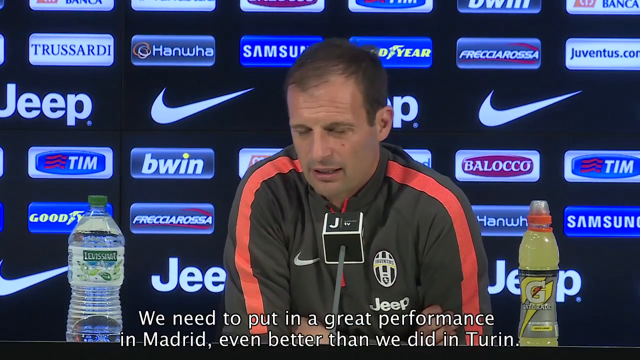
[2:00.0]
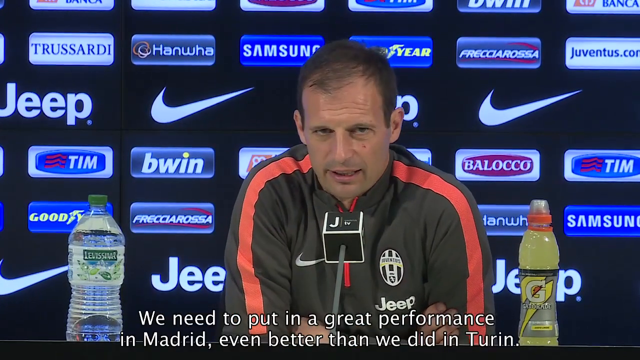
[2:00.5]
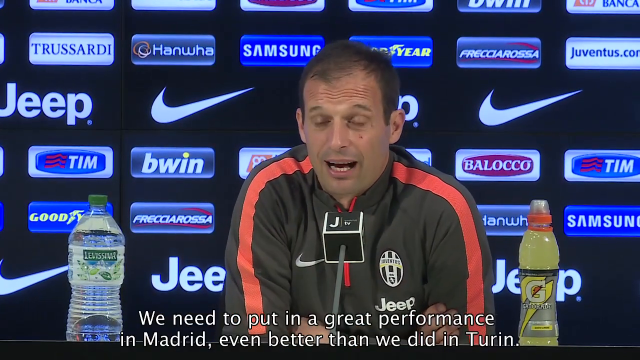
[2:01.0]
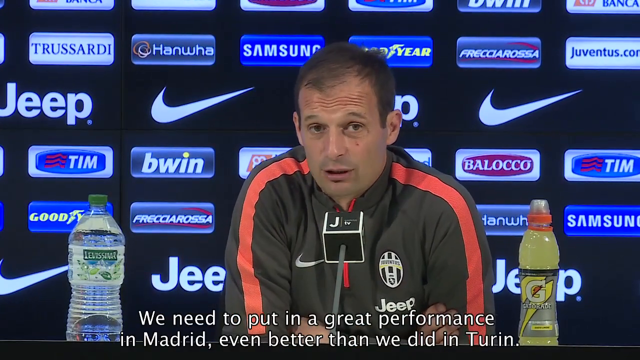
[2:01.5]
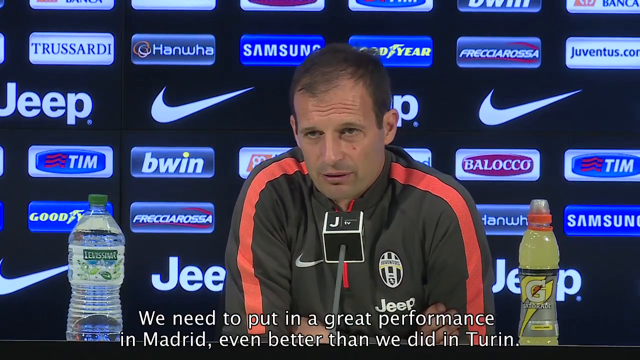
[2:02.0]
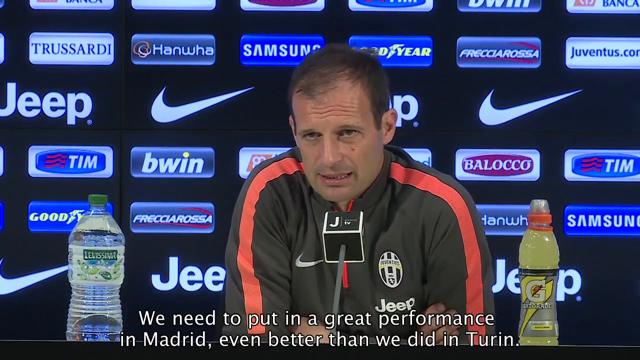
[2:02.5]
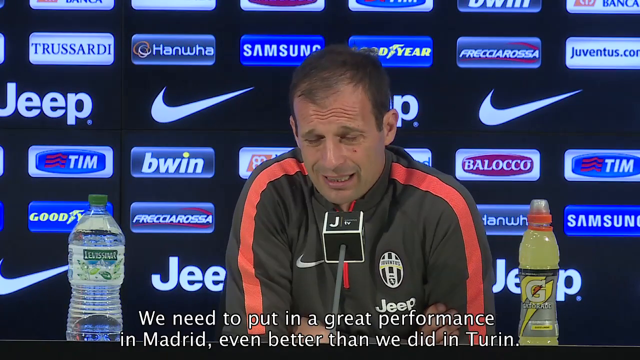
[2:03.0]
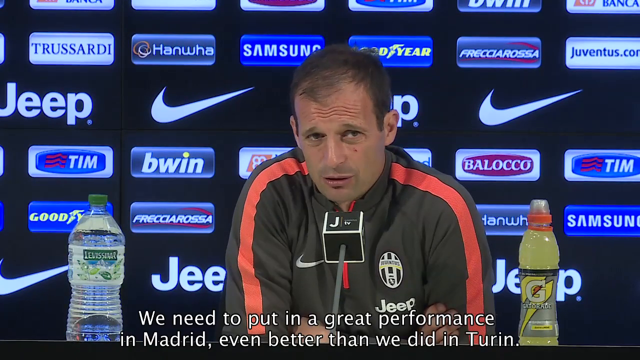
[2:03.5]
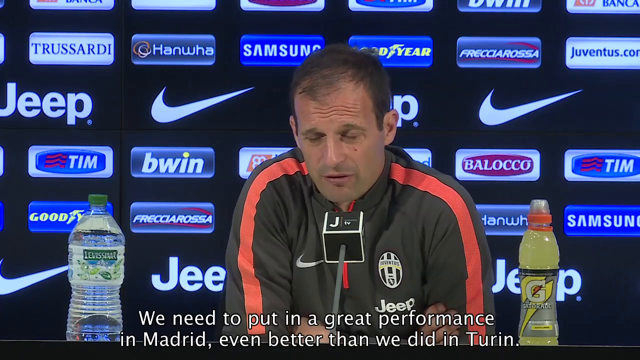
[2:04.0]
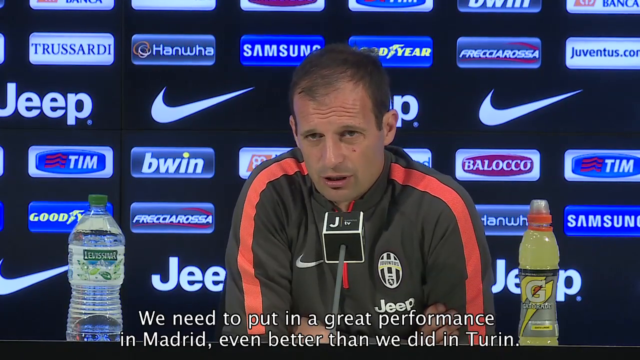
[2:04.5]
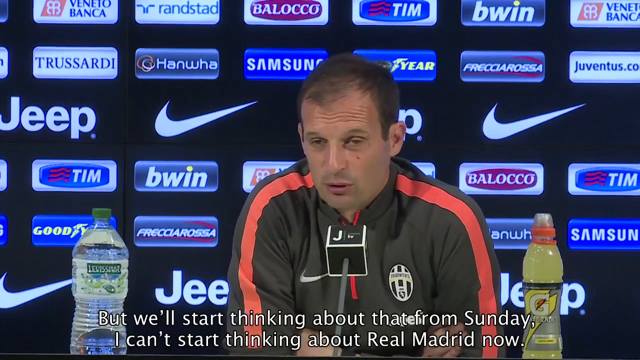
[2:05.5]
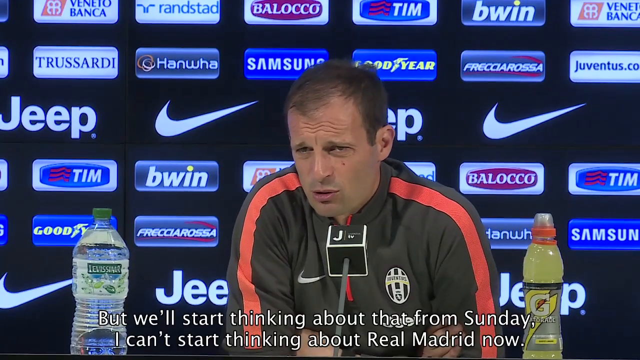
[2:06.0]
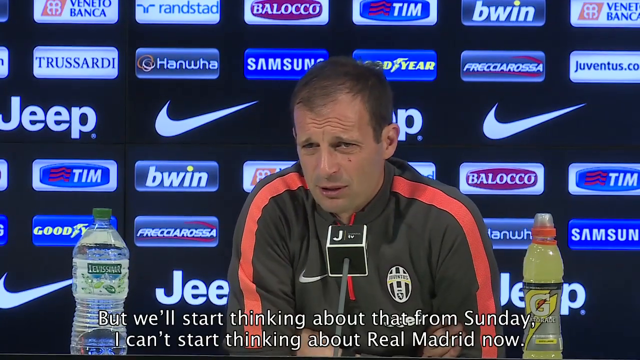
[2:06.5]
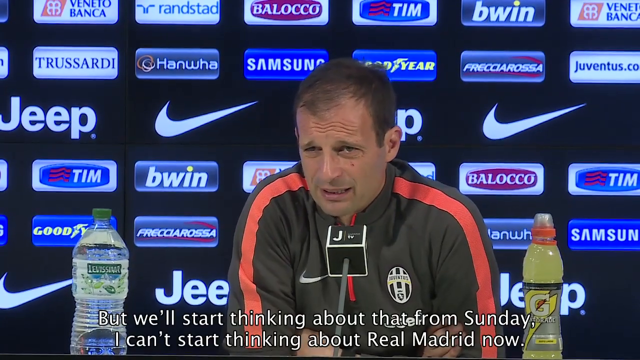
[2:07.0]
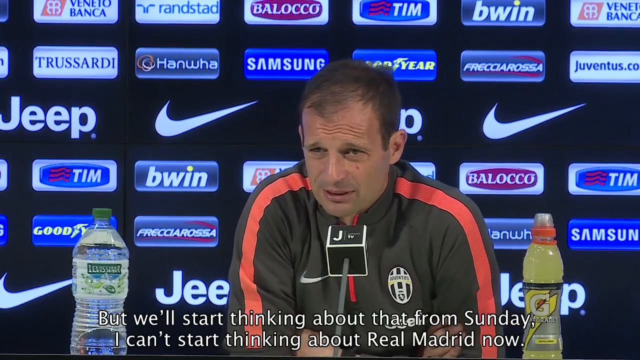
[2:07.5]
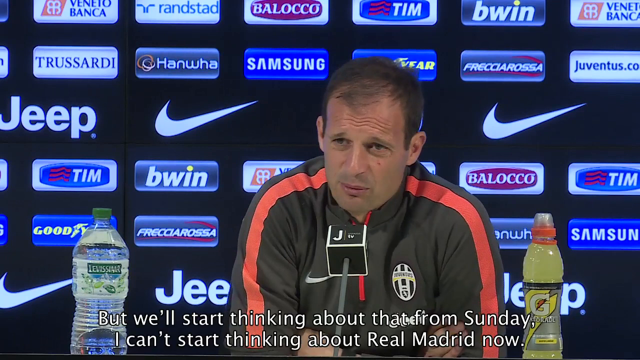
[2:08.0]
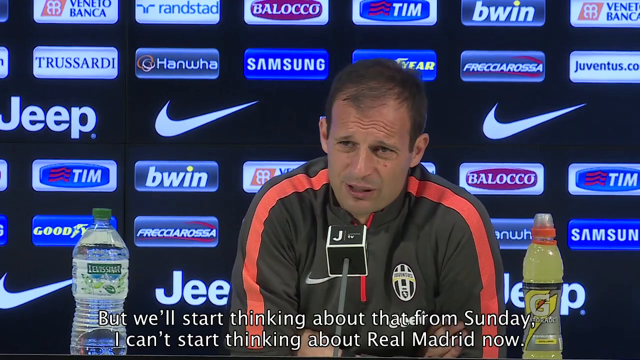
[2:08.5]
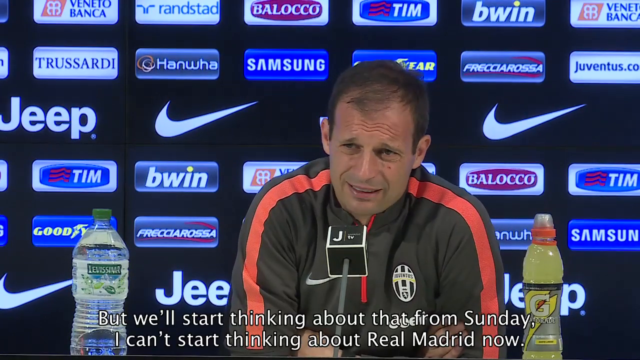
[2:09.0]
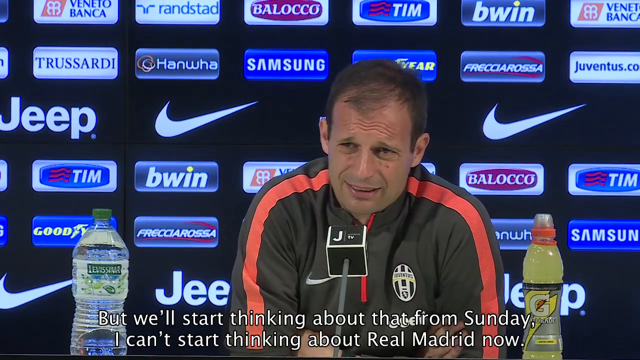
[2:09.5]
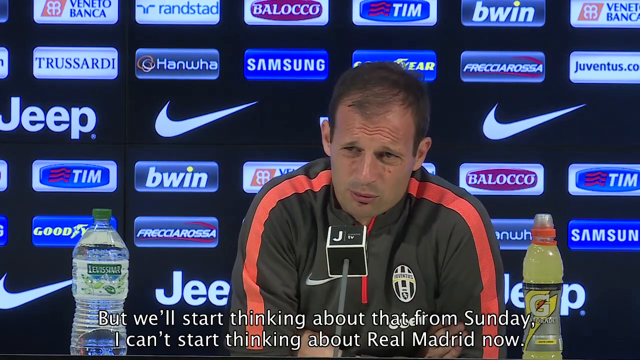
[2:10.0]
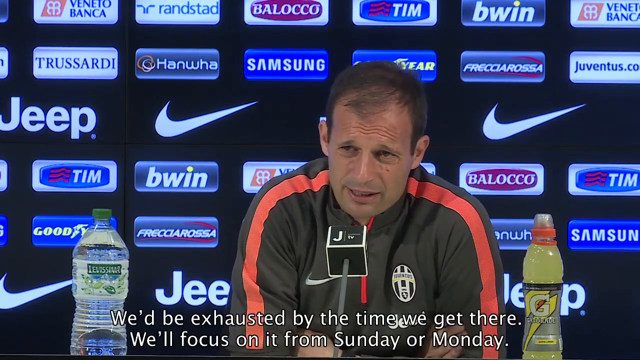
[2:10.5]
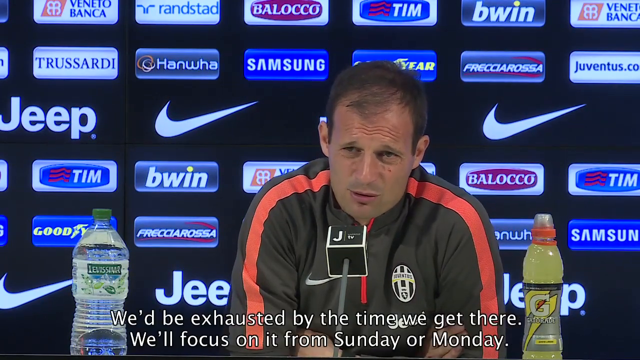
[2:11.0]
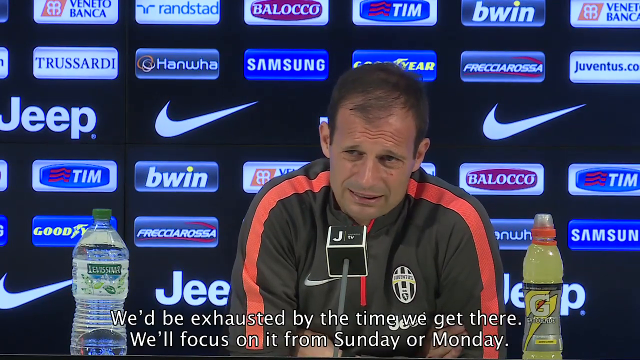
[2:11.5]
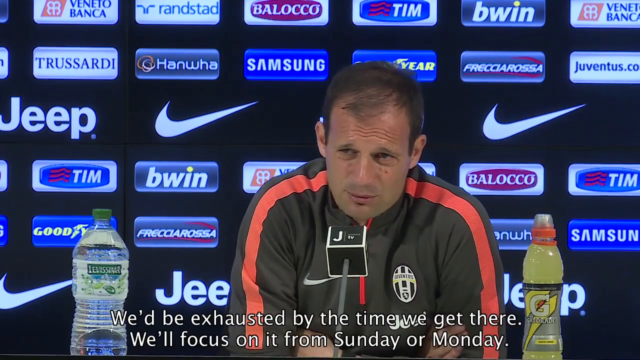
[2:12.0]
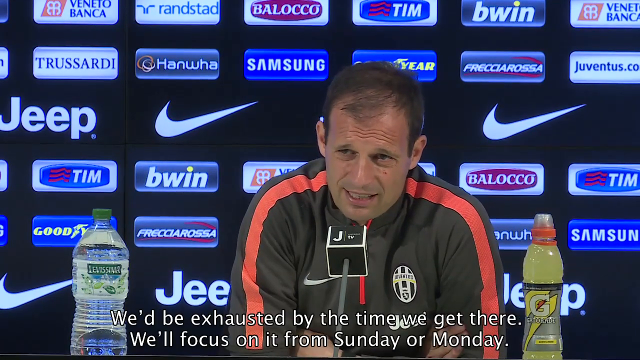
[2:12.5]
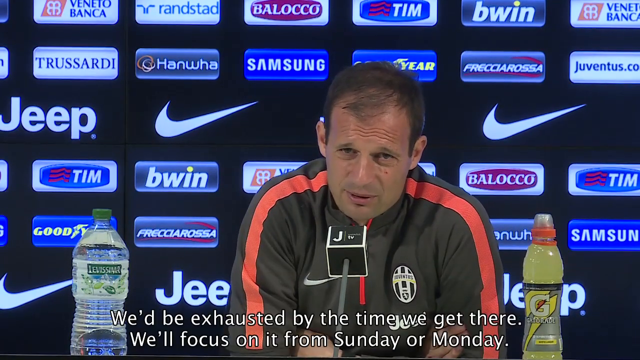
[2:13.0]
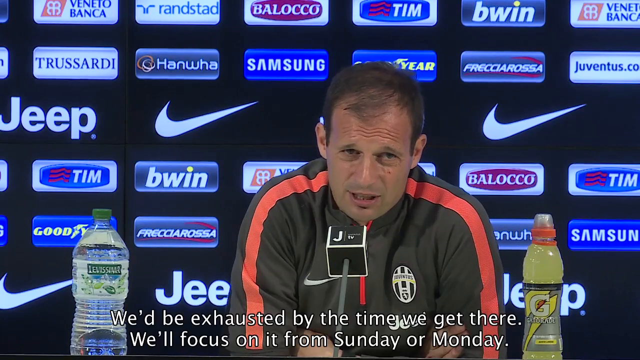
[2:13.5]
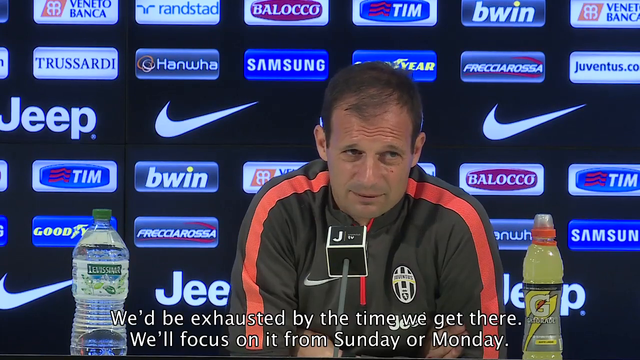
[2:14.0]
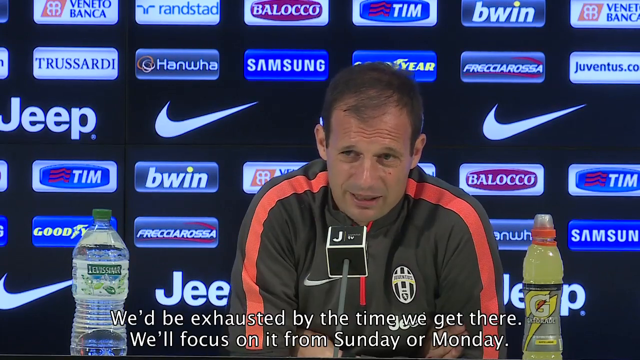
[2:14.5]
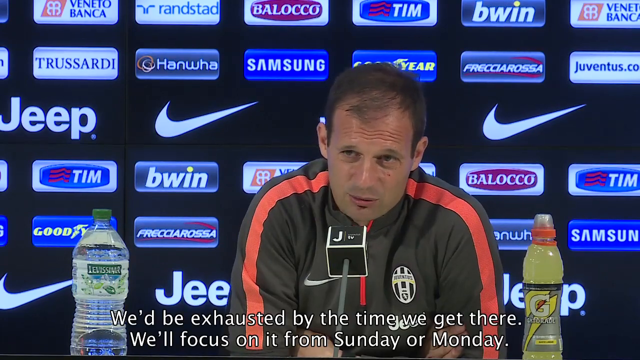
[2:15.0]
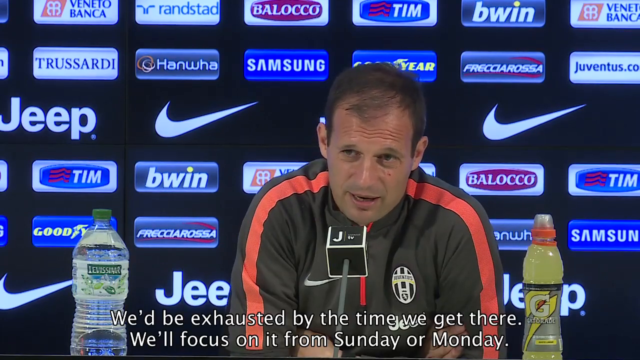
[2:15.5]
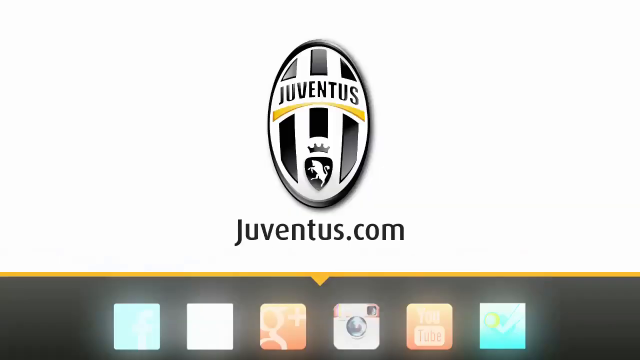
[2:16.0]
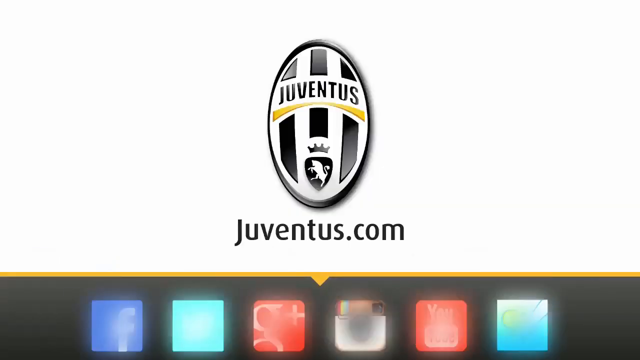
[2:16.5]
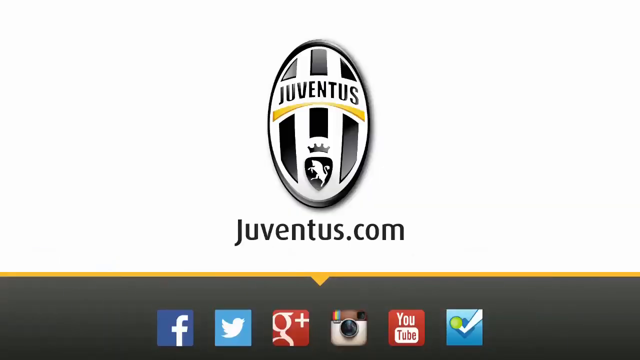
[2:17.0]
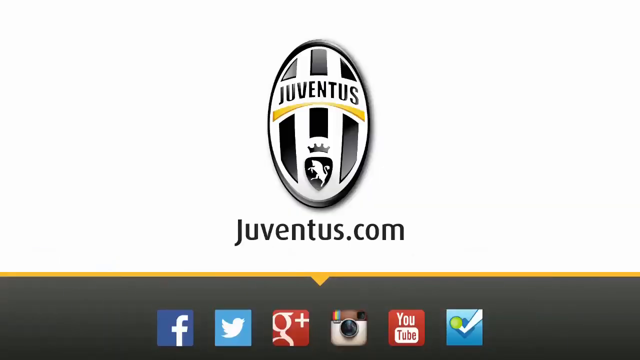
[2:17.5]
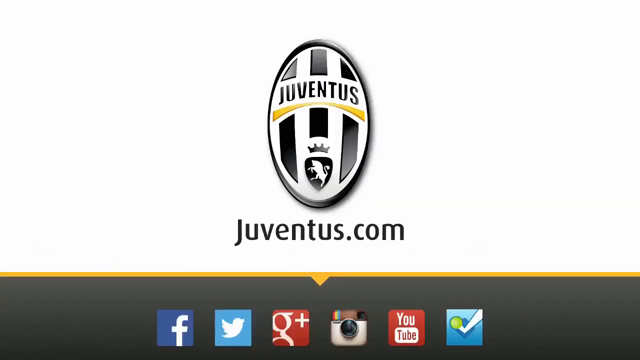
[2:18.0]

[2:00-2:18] The man, apparently the team's coach, keeps talking with his arms folded and his elbows leaning on the surface in front of him. He wears a long-sleeve top that looks dark grey, with a red zipper that goes only to his chest rather than all the way down. Red stripes run from just below the collar, over his shoulders and down his arms, presumably to the bottom of the sleeves. On his left chest, opposite the Nike sign, is what looks like a ball-shaped emblem with the word Inventus or Juventus in it, either the team or a sponsor, and just below that picture is the word Jeep. The text continues: "we need to put in a great performance in Madrid, even better than we did in Turin, but we'll start thinking about that from Sunday. I can't start thinking about Real Madrid now."